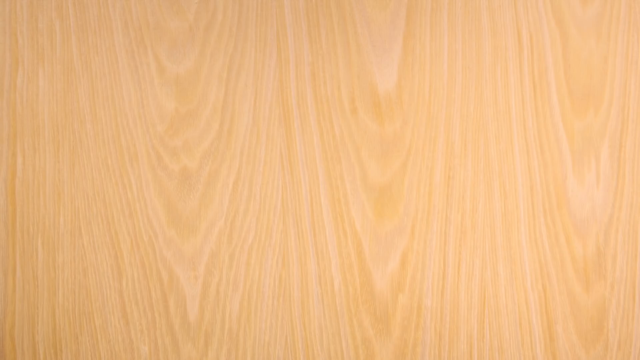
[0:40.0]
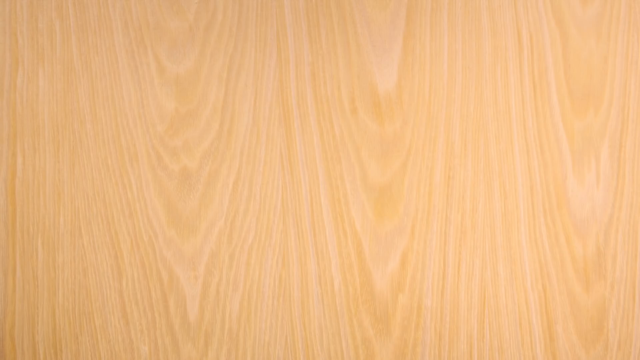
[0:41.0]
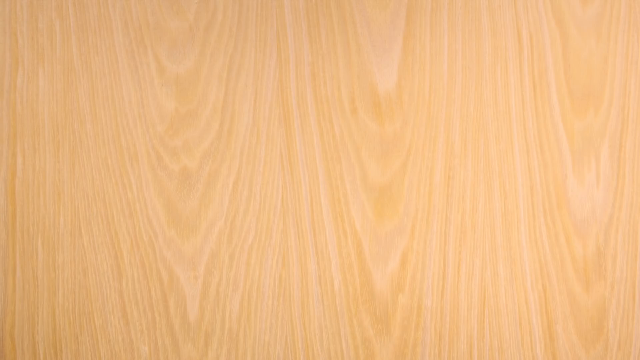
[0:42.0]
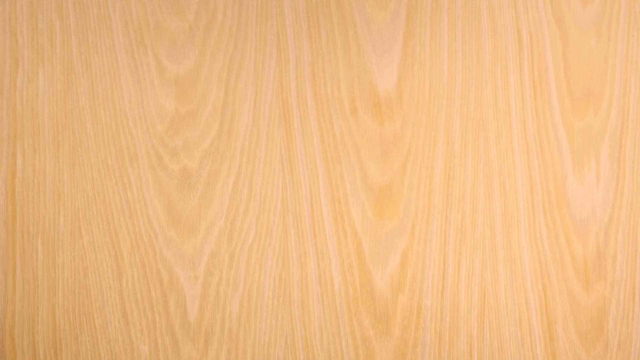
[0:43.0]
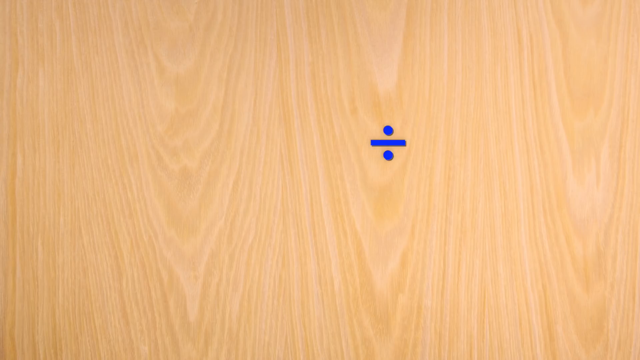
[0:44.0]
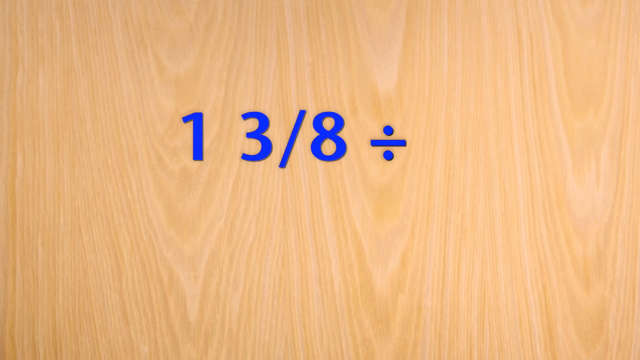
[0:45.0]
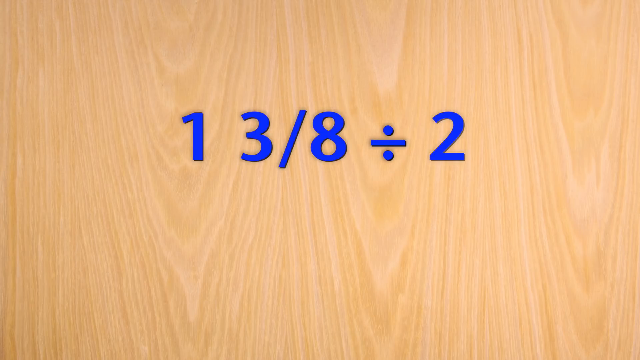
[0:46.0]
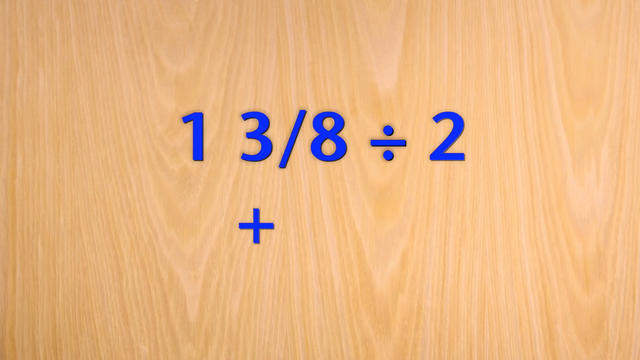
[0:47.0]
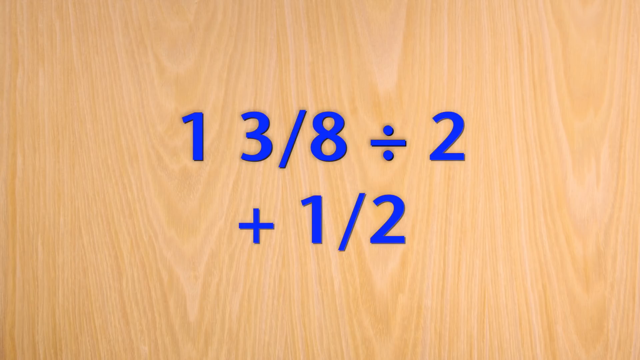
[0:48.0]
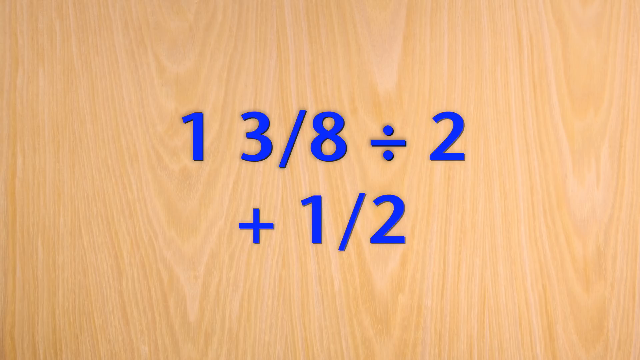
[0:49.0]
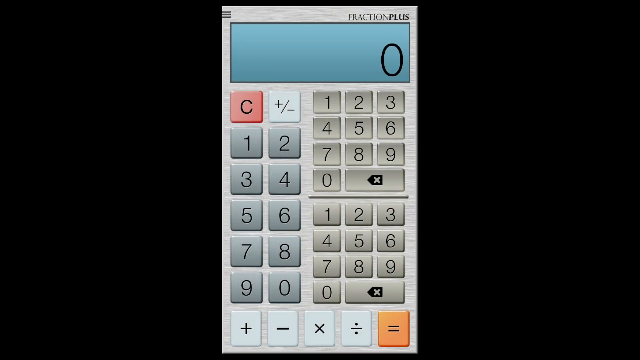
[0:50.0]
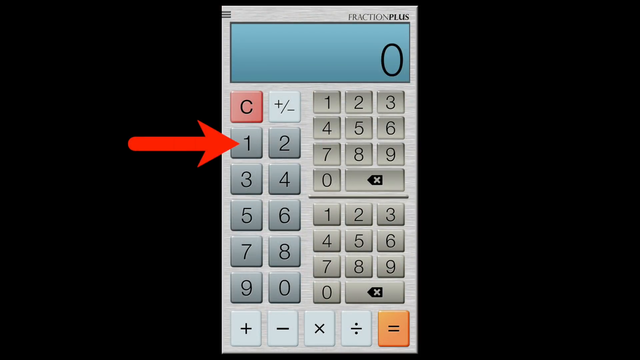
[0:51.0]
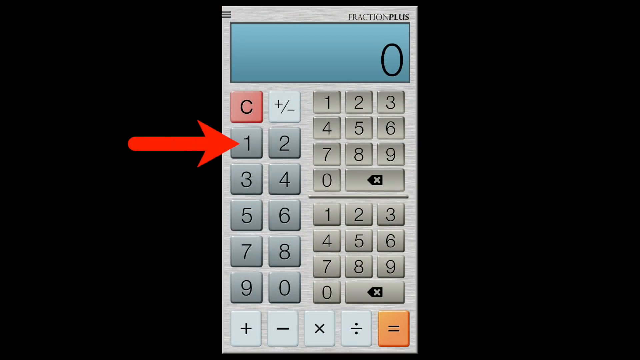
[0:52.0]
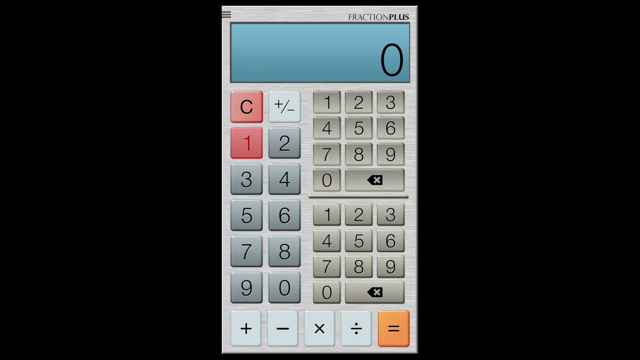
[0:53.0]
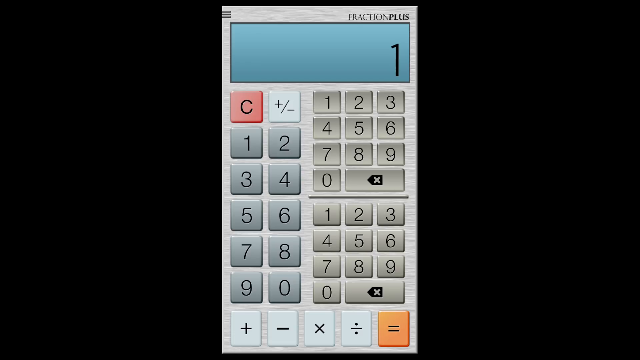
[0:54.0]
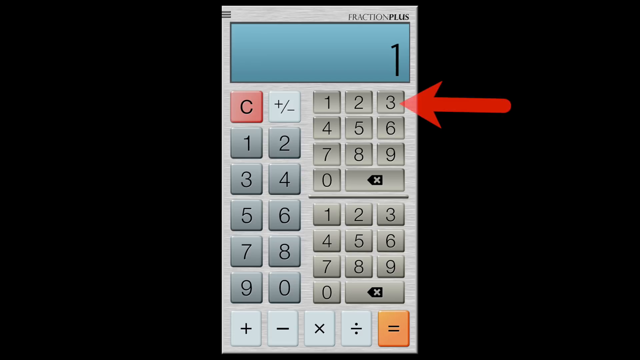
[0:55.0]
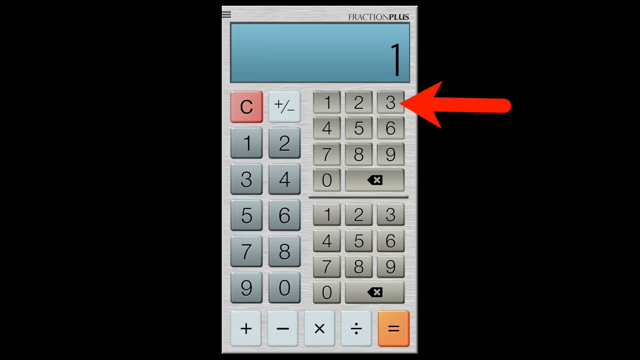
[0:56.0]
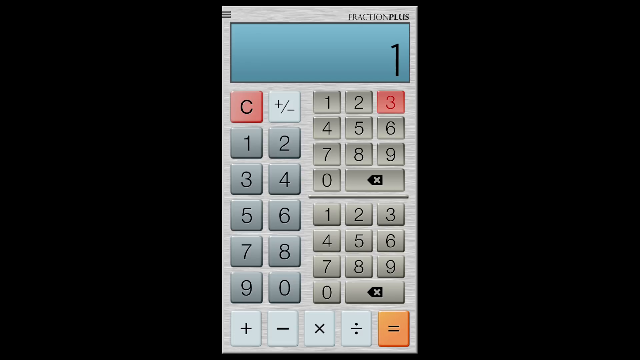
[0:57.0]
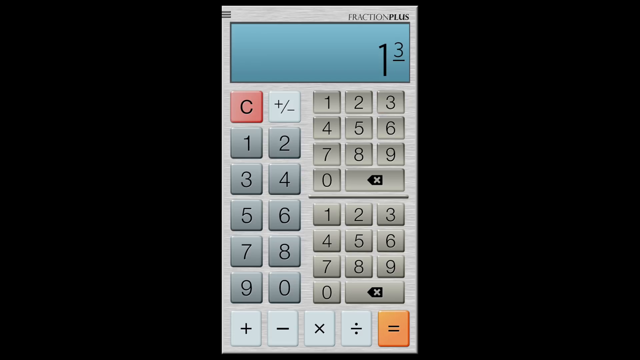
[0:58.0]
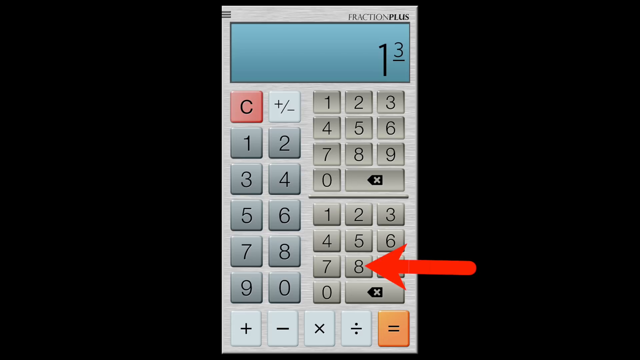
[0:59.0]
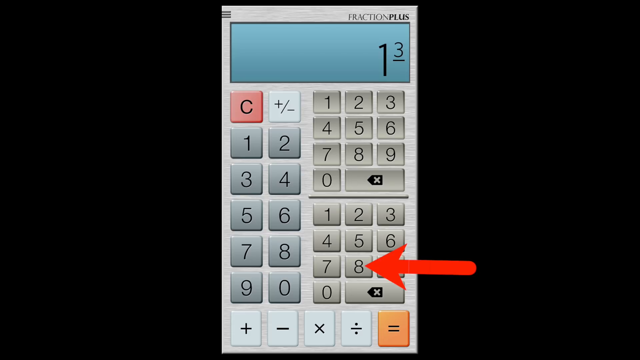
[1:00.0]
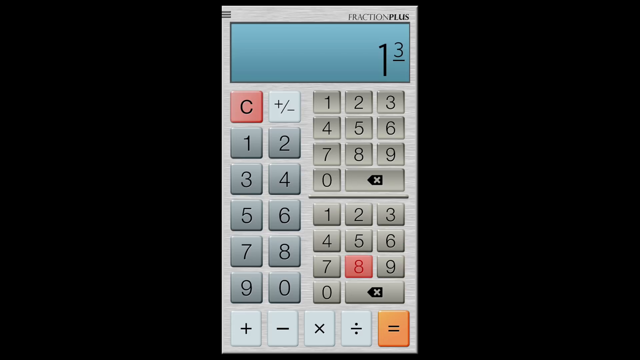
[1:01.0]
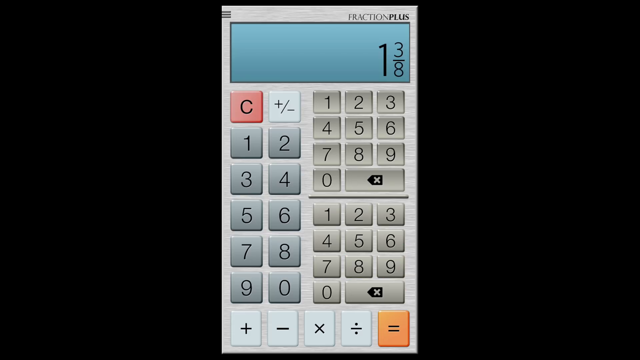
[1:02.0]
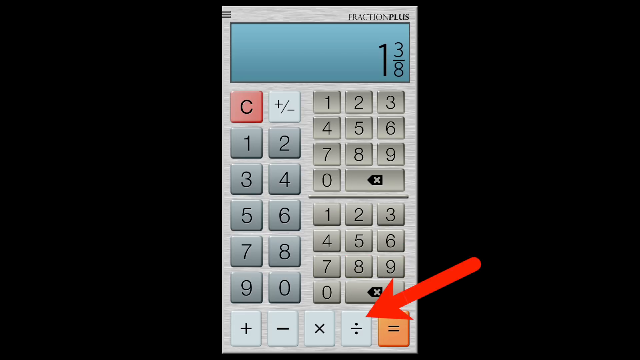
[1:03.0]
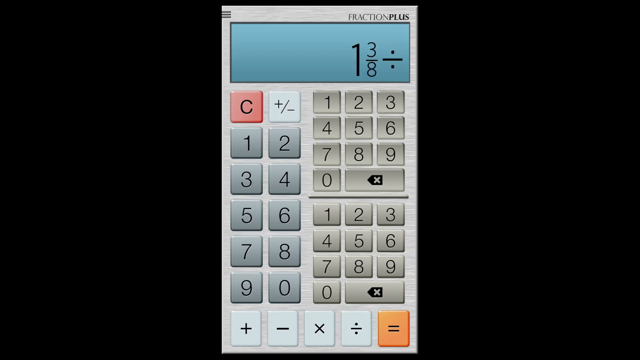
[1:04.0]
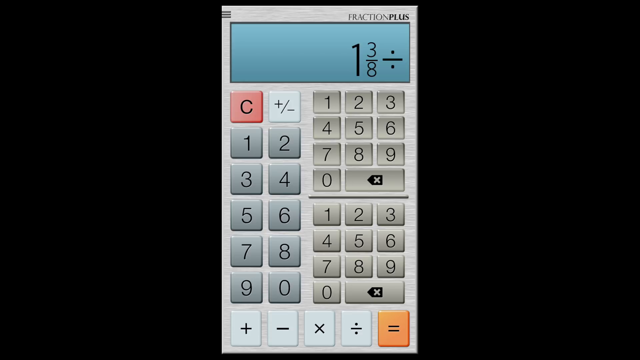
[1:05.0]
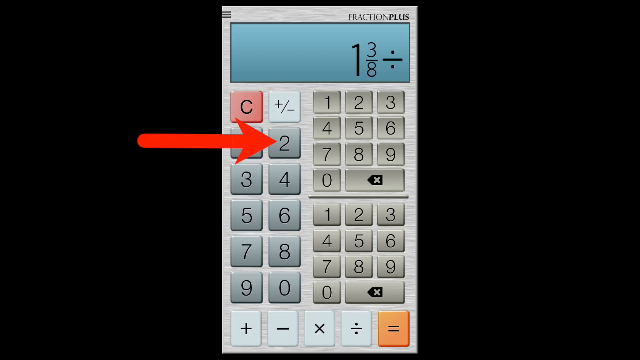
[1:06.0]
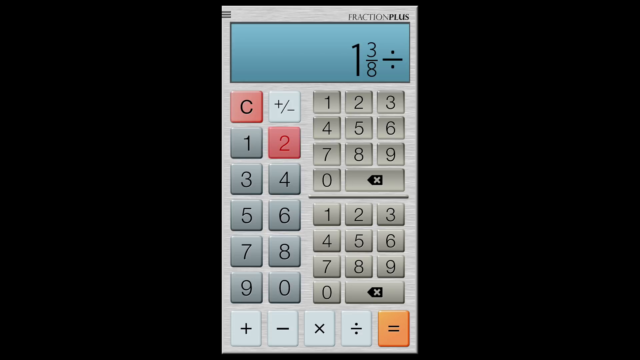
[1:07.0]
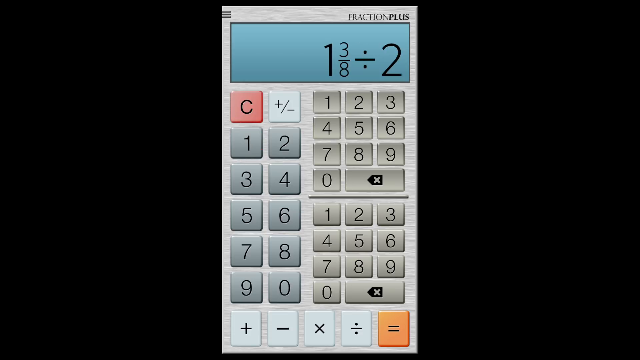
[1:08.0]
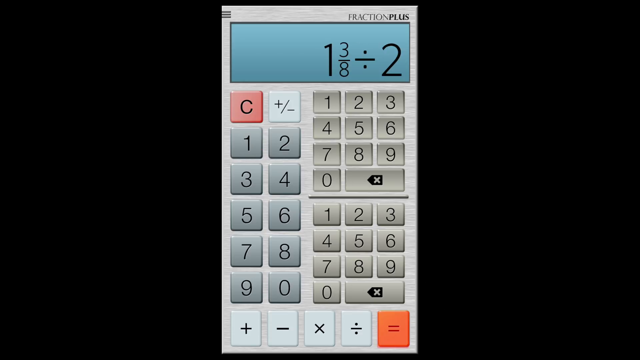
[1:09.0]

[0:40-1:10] The blonde wood background with distinct grain covers the screen. Bold blue numerals appear: one and three-eighths divided by two plus one-half. The screen is then replaced by a black screen with a centered calculator. The calculator's numerals are in gray-blue and solid gray, and its display is blue showing the numeral zero. A red arrow appears on the left side of the screen pointing at the one in blue, then points at the three in gray on the right-hand side, then at the 8 on the right-hand side, then at the divide key. Next the red arrow points to the 2 on the left-hand side, and then at the equals key.